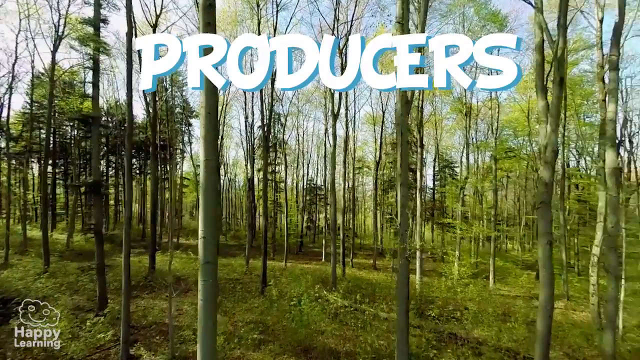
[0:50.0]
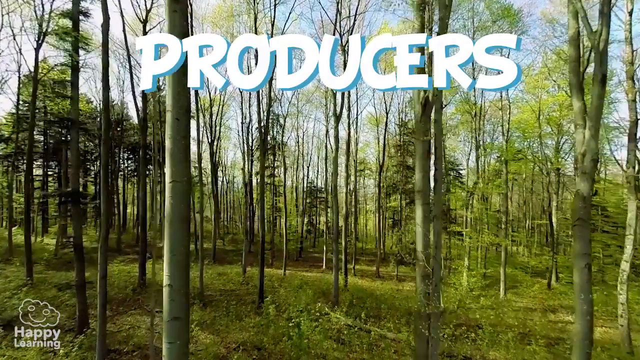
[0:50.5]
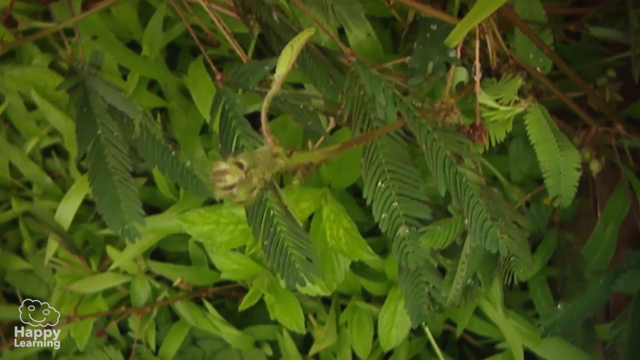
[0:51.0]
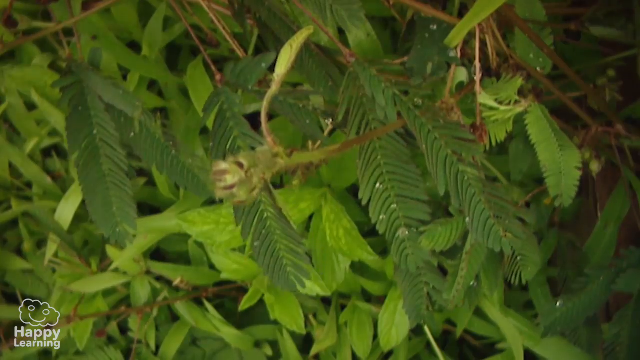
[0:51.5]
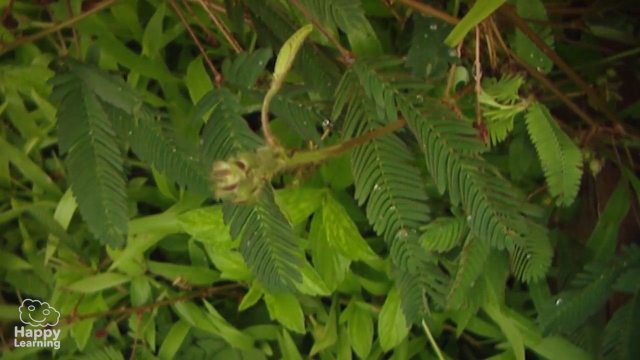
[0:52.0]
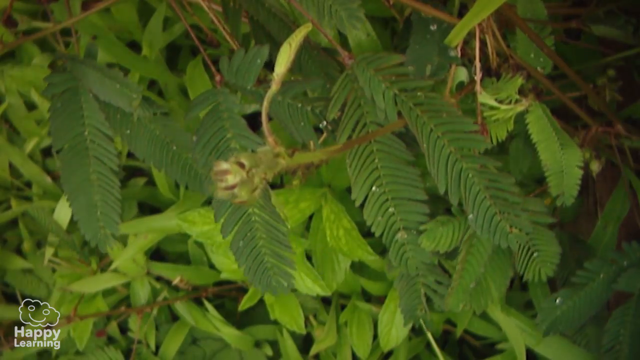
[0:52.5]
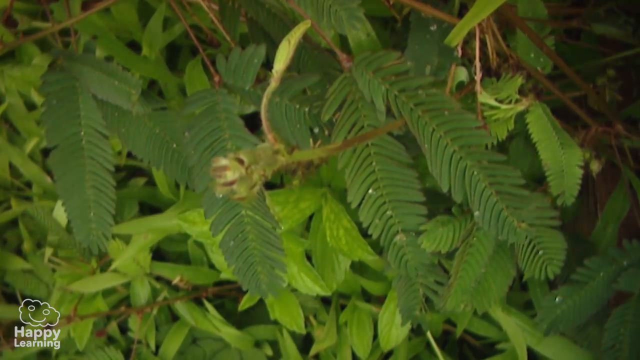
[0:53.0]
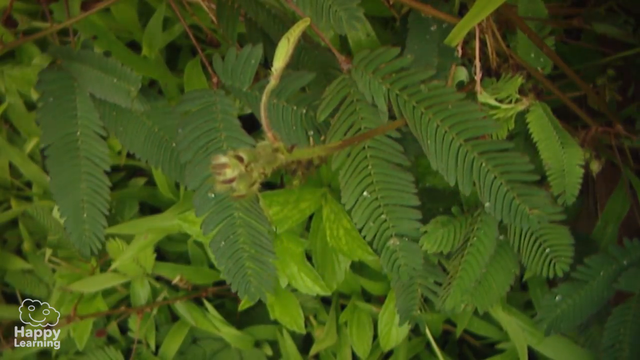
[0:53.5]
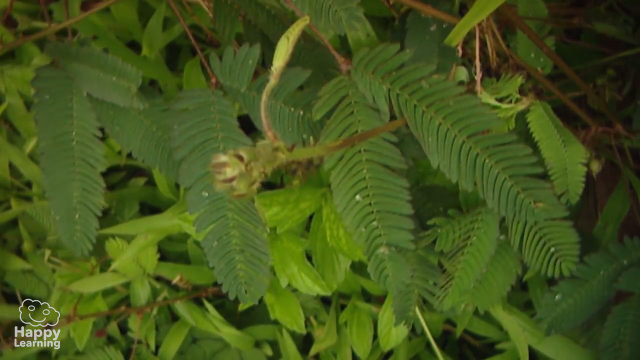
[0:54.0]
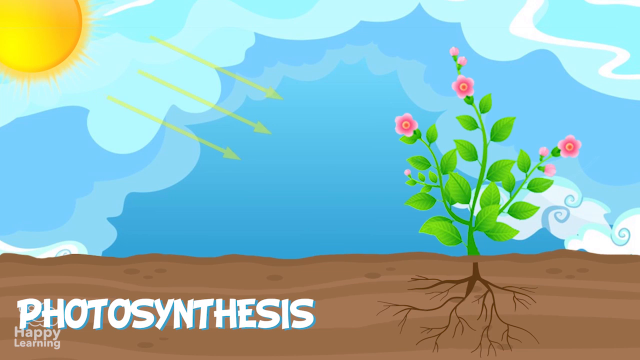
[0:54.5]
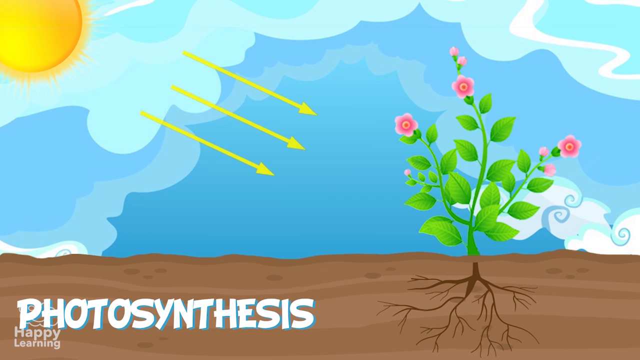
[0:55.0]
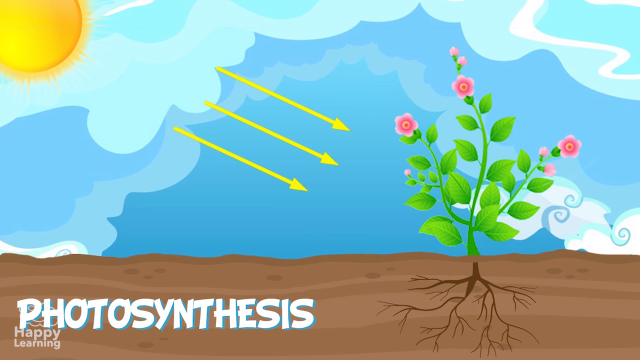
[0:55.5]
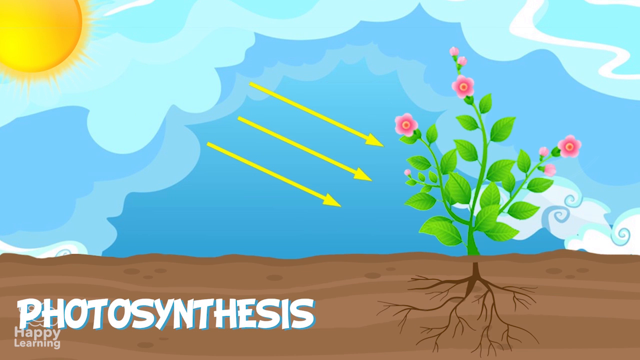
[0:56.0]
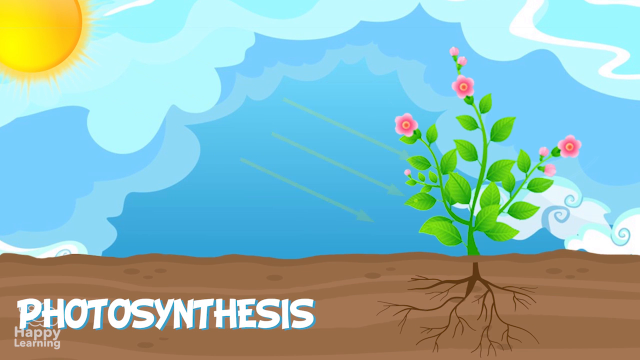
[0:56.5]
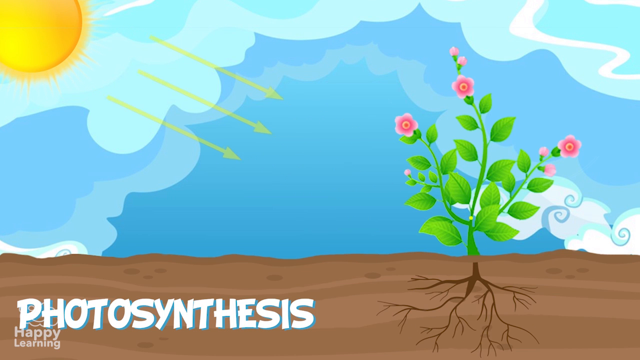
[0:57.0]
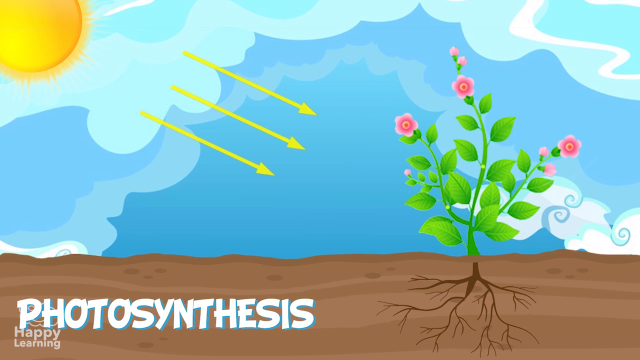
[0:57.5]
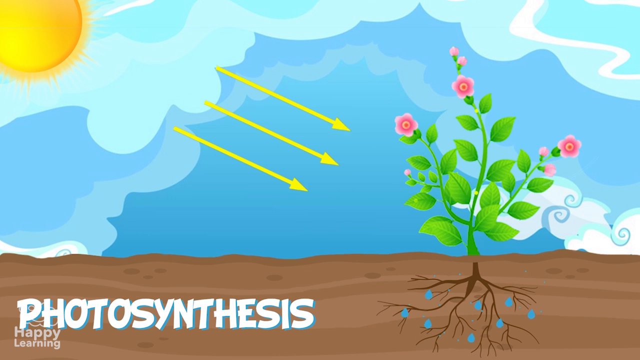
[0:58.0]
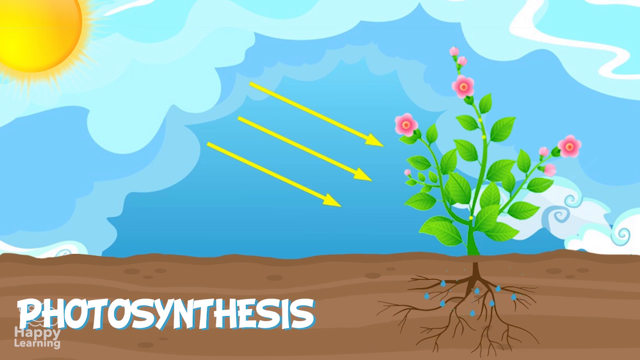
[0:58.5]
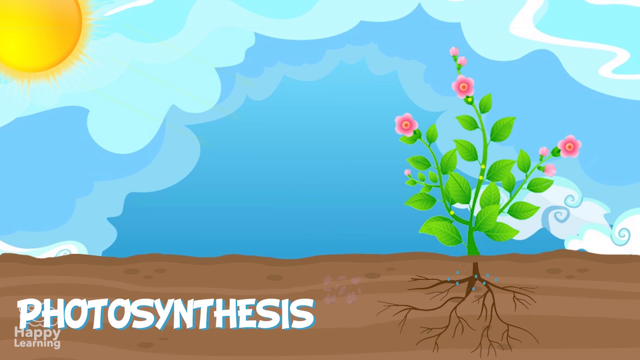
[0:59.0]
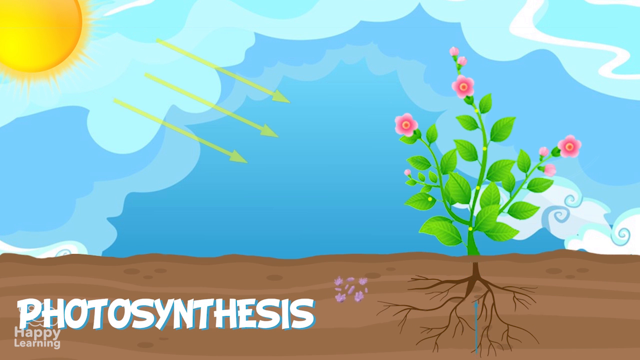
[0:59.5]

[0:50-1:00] The large "PRODUCERS" letters stay centered at the top as the view continues a little farther into the woods for a couple of seconds. It then transitions to a closeup of either tree leaves or some kind of plant life, which can kind of be seen growing, as if in sped-up video. Next comes a cartoon diagram with brown dirt for the ground and a blue sky with some clouds. In the dirt on the right side is a plant with a few pink flowers on it, and the sun is in the upper left corner. Three long yellow parallel arrows point down toward the plant, animated so they move from the upper left down toward the plant on the right. In the bottom left is the text "Photosynthesis."